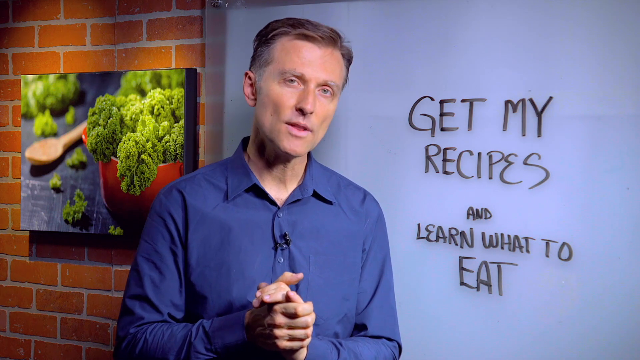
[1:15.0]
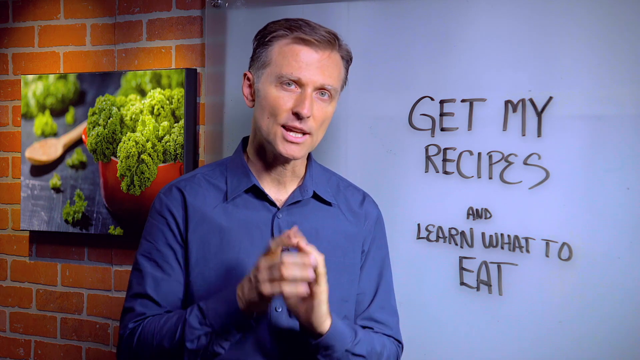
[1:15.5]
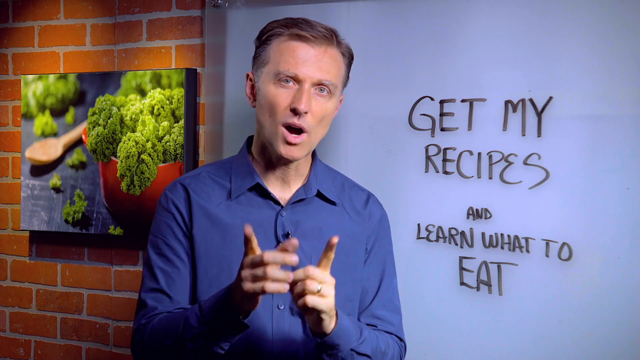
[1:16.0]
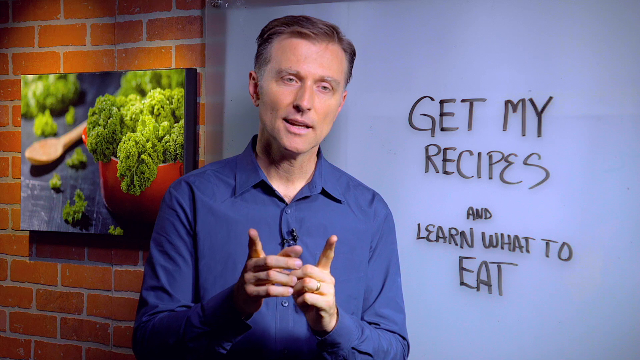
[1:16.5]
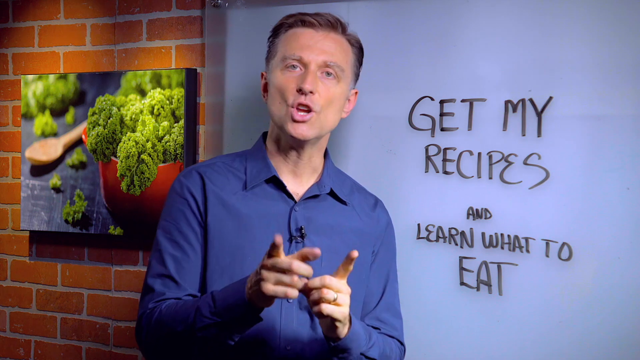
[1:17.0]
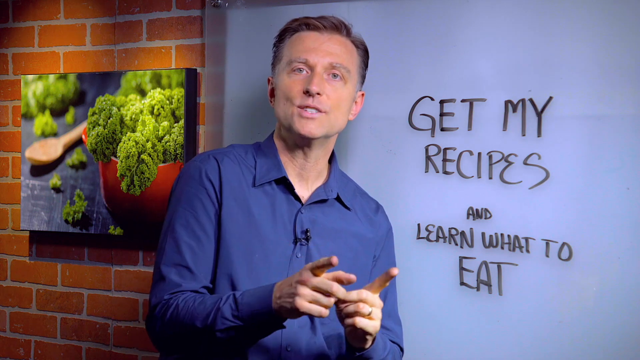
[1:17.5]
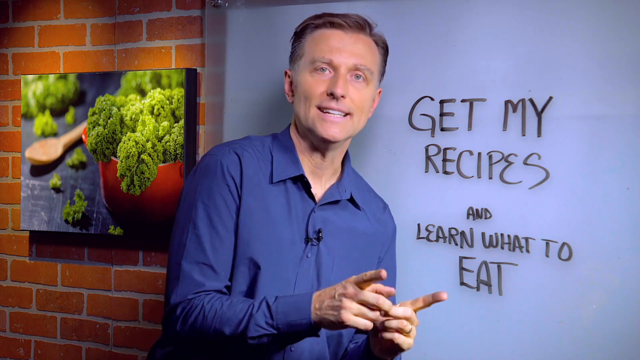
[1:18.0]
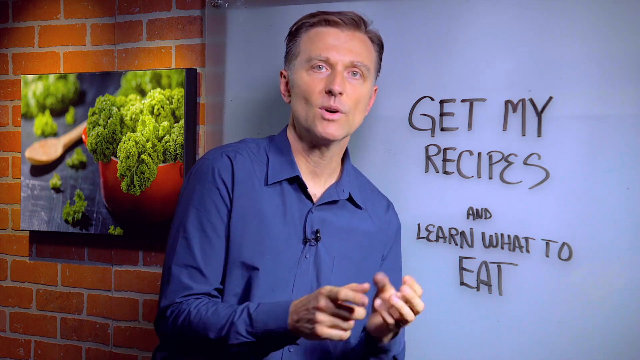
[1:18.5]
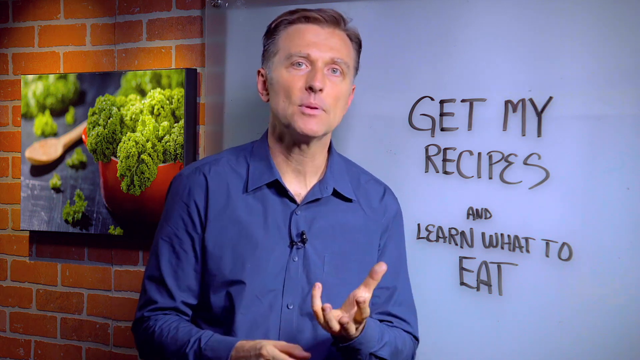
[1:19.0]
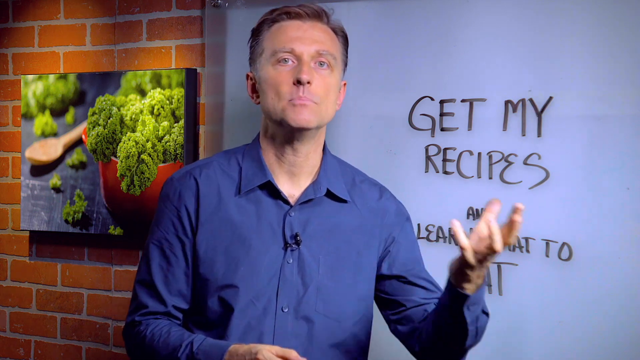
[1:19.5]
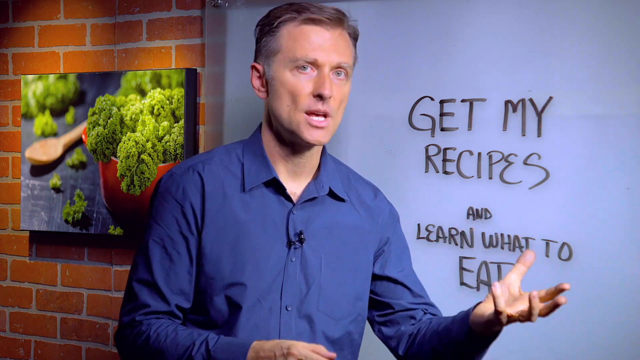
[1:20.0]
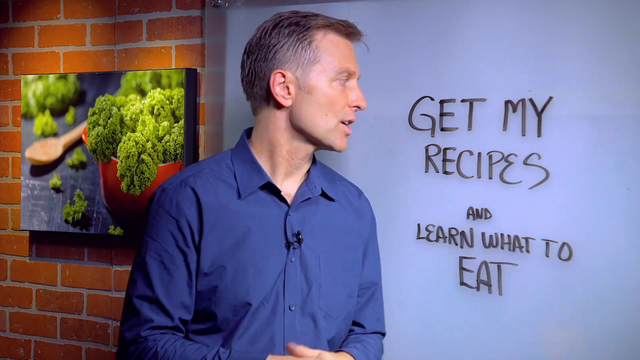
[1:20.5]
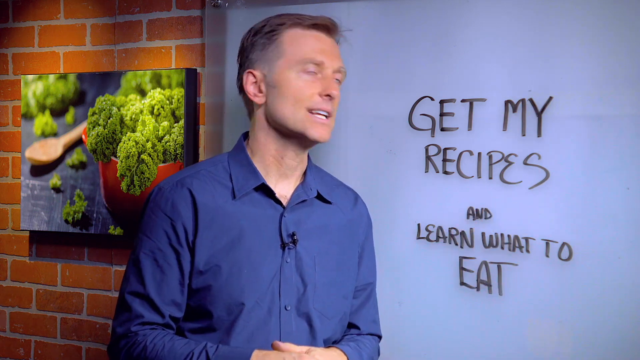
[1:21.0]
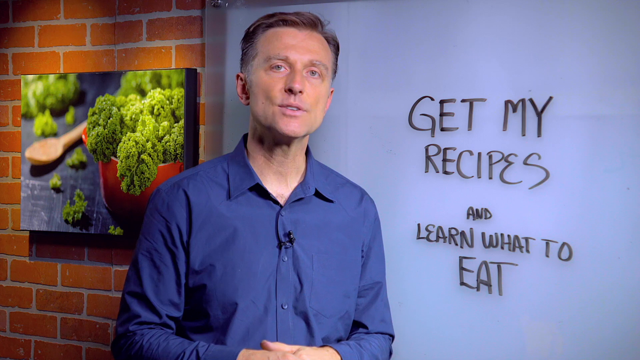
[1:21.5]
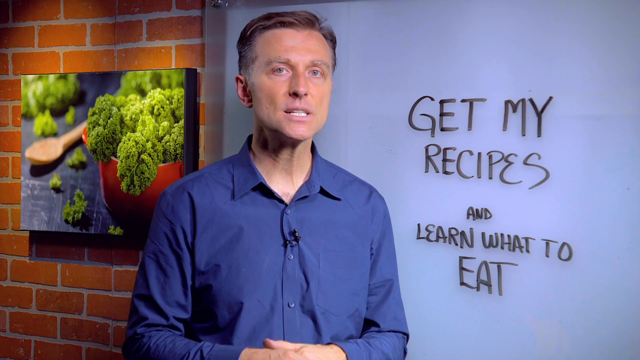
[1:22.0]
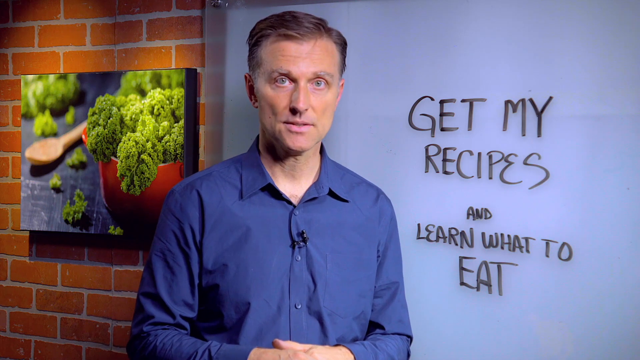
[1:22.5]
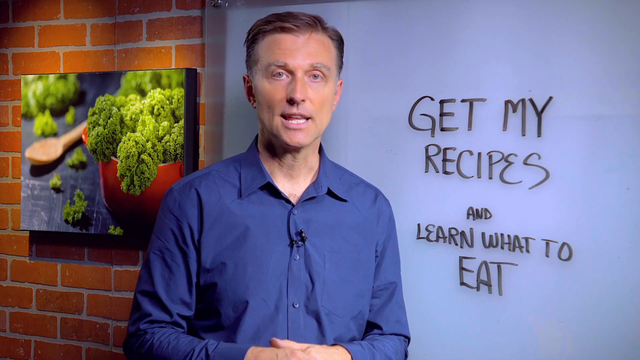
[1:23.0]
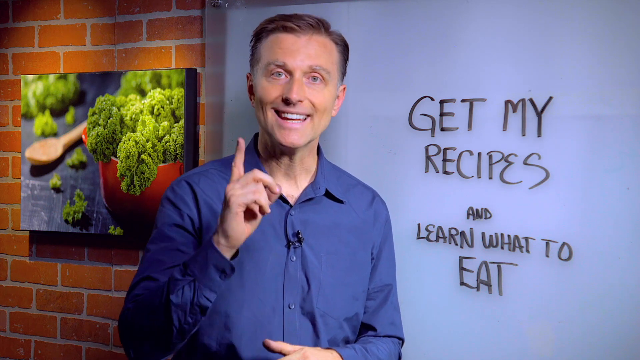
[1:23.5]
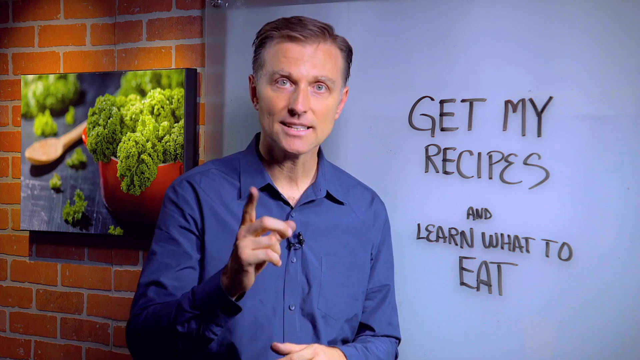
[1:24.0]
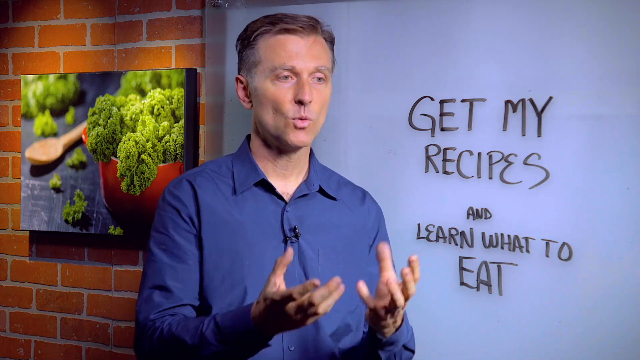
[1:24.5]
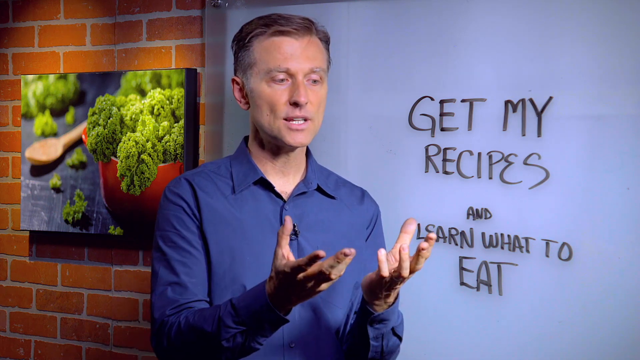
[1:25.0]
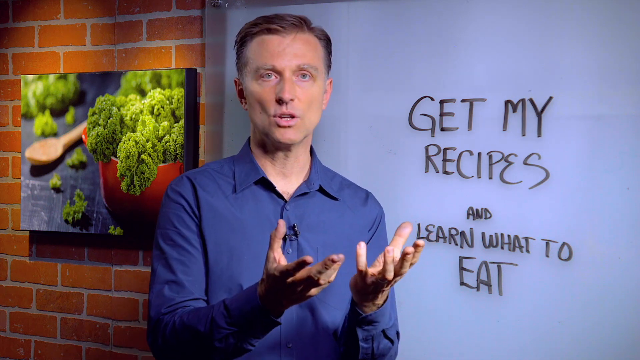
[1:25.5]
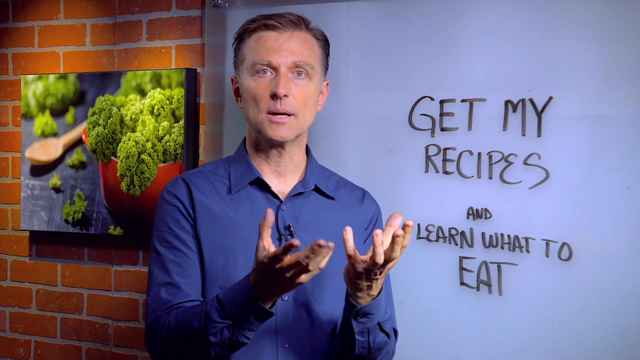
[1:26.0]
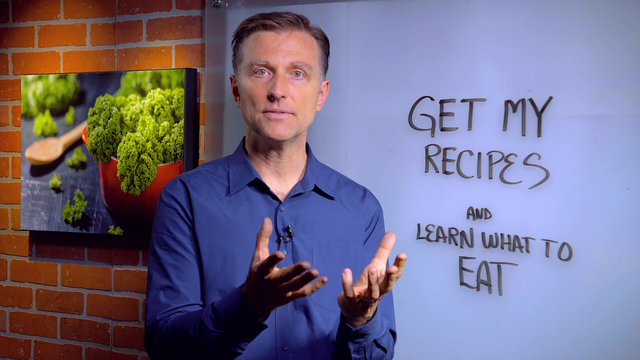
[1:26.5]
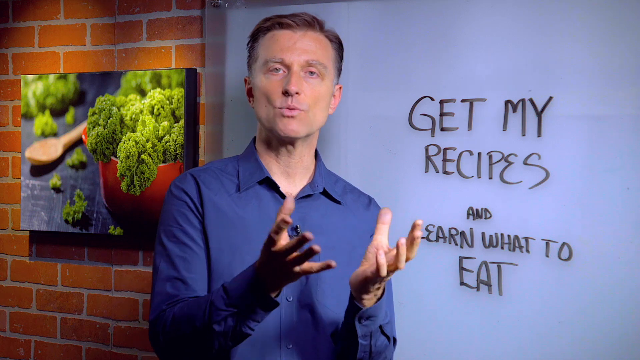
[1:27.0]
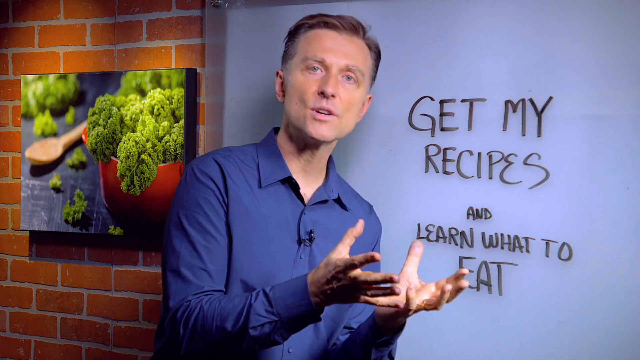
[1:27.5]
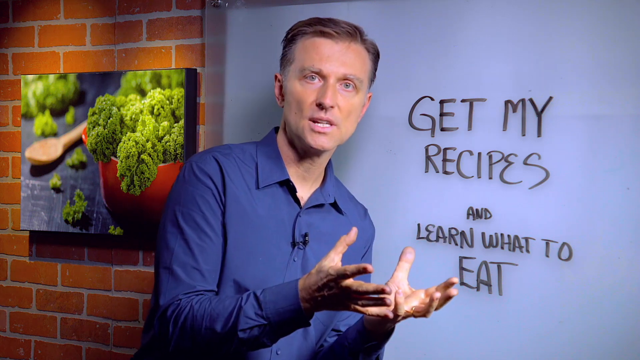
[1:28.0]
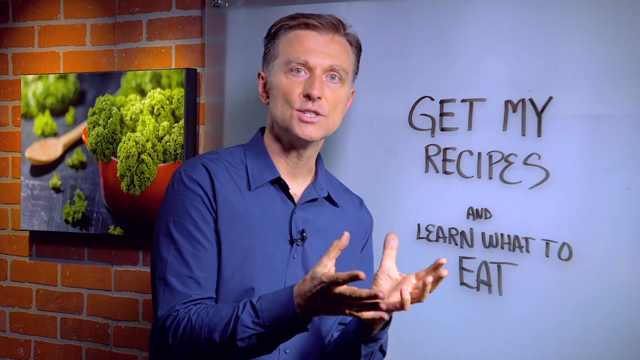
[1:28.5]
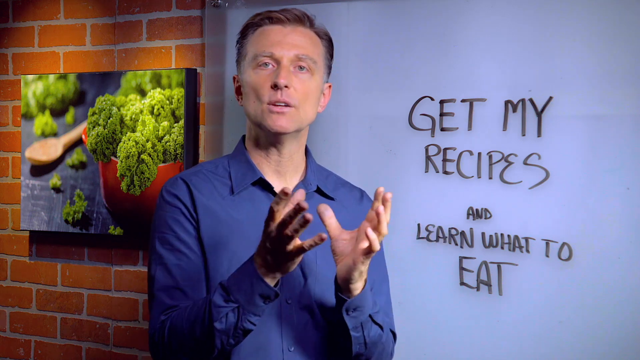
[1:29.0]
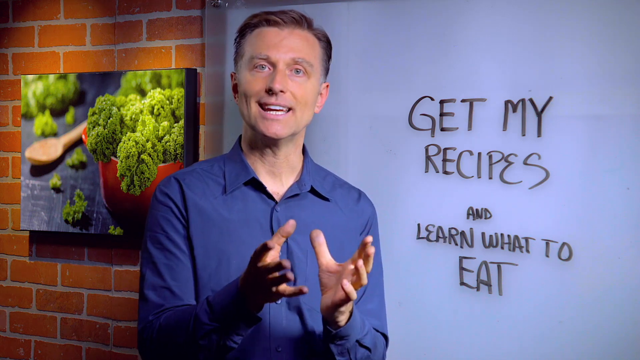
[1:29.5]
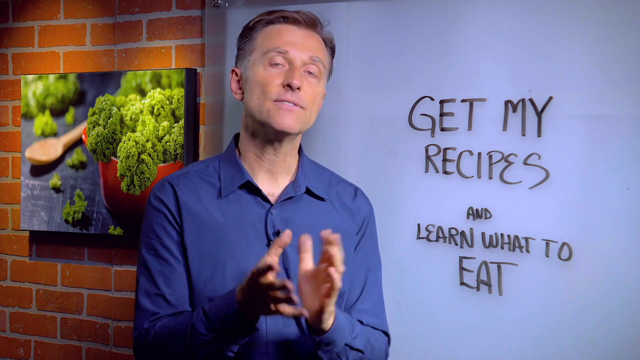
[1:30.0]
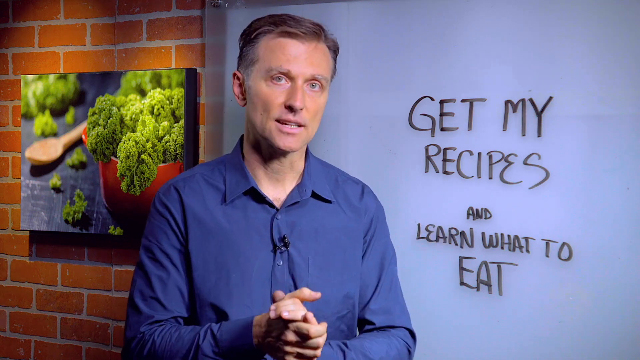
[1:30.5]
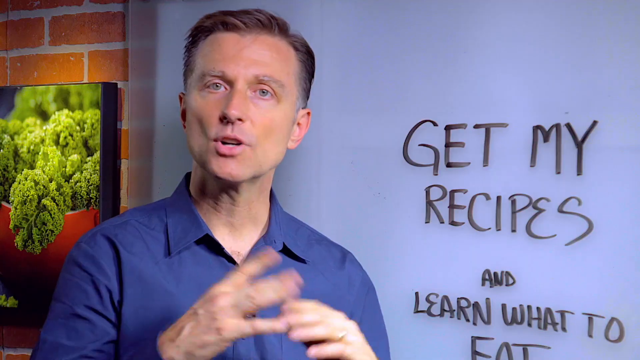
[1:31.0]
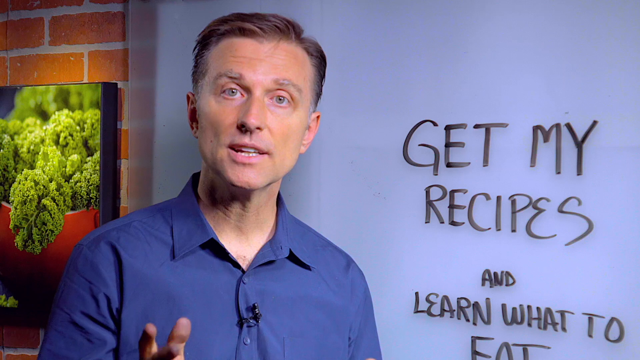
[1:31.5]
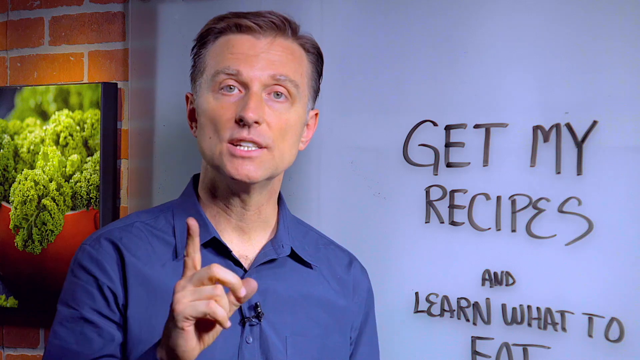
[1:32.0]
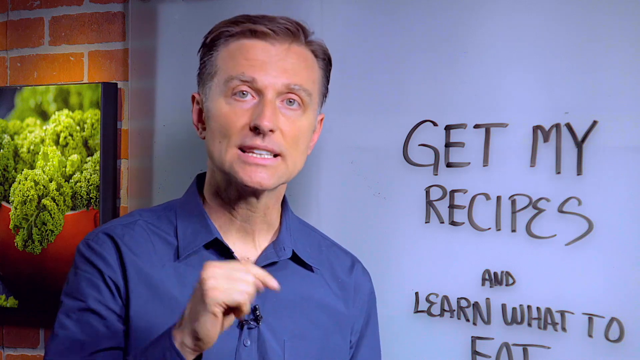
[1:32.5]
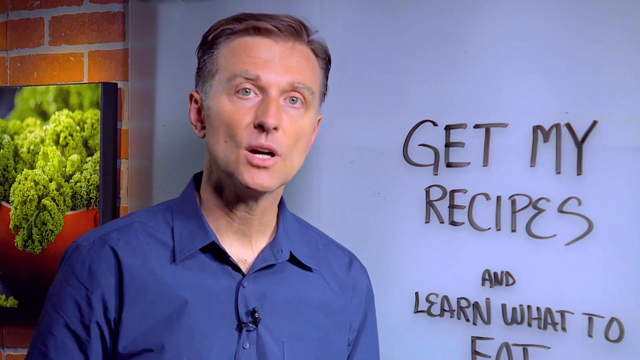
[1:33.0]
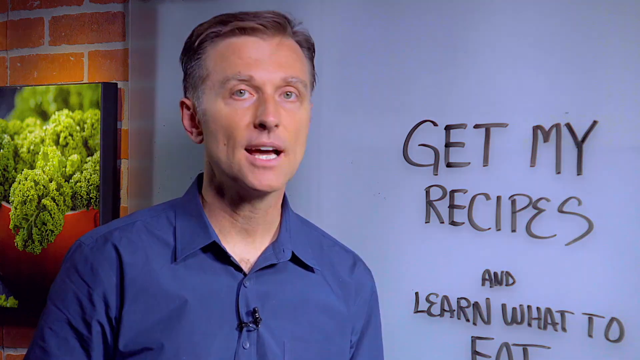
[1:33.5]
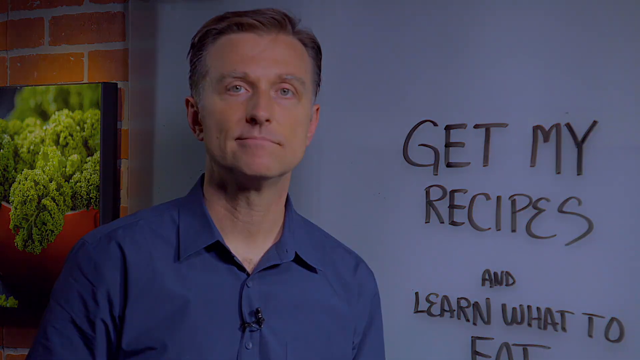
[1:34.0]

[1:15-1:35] A man stands in front of a board giving a lecture, emphasizing words with hand motions and pointing with both fingers. He has blue eyes and dark, kind of grayish black hair, and wears a bluish gray dress shirt buttoned up the front and open at the neck with no tie, with a black clip-on microphone. Behind him, beside the screen on the left, is a brick wall with a framed picture of broccoli in a red bowl with a wooden spoon.